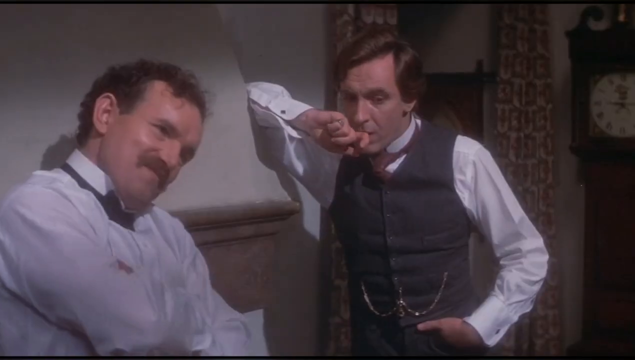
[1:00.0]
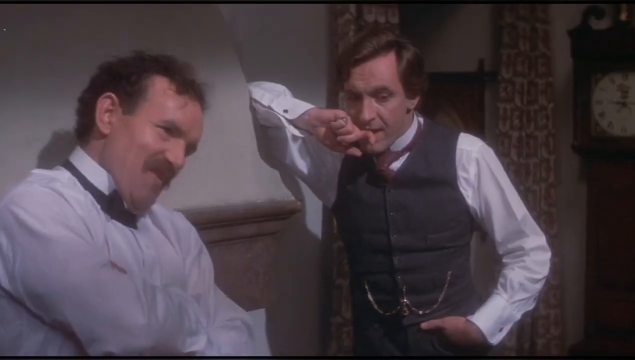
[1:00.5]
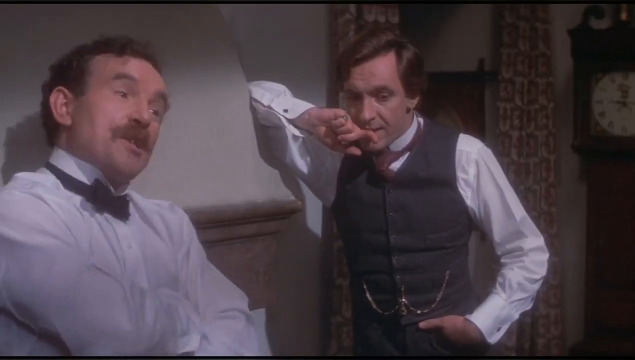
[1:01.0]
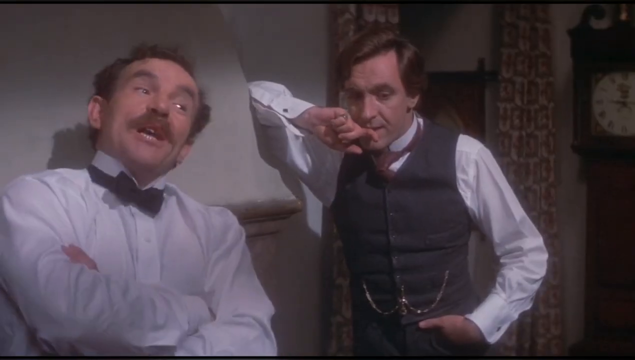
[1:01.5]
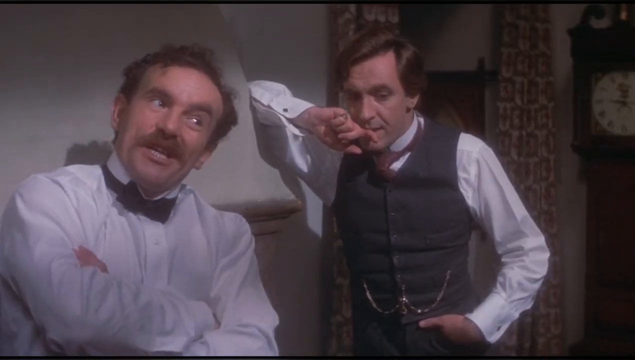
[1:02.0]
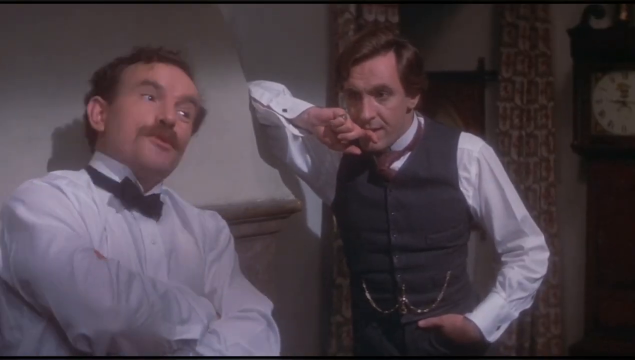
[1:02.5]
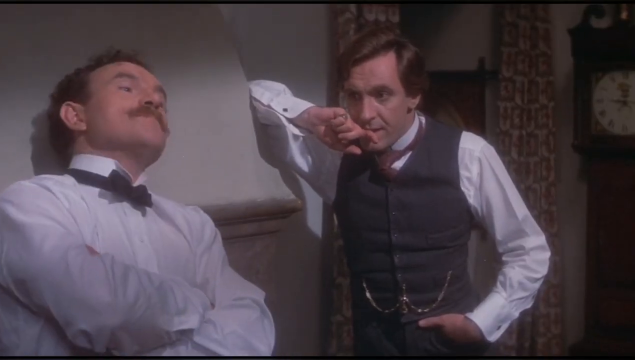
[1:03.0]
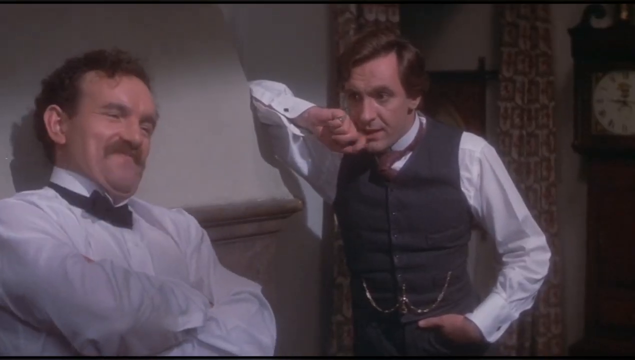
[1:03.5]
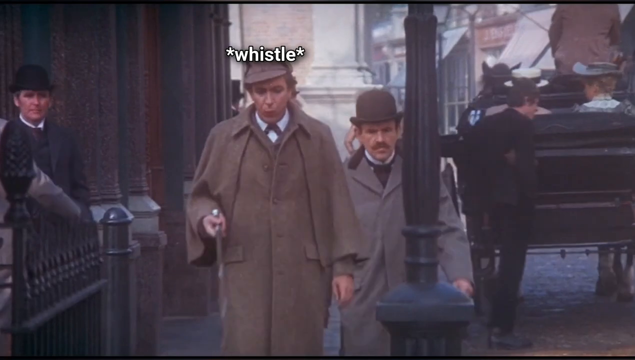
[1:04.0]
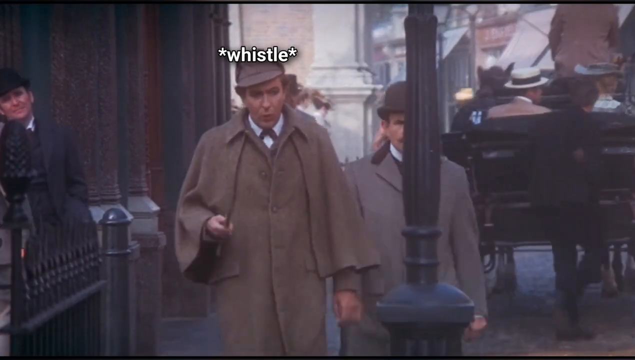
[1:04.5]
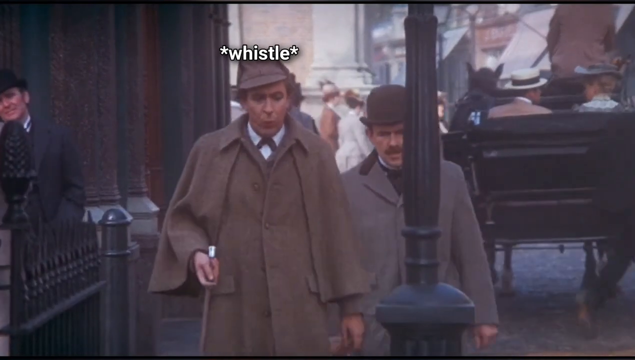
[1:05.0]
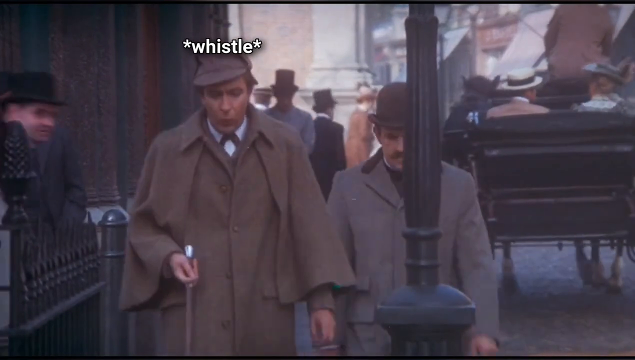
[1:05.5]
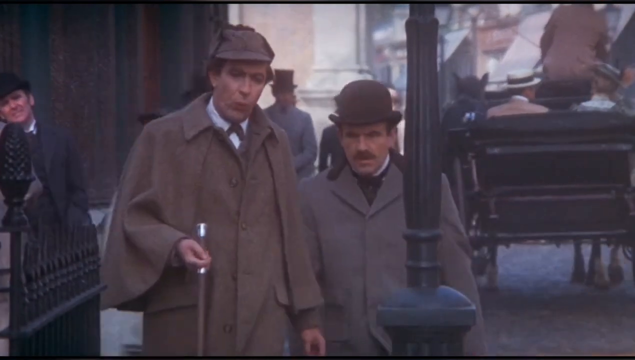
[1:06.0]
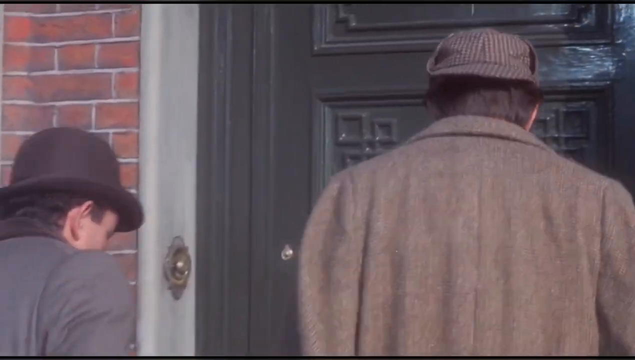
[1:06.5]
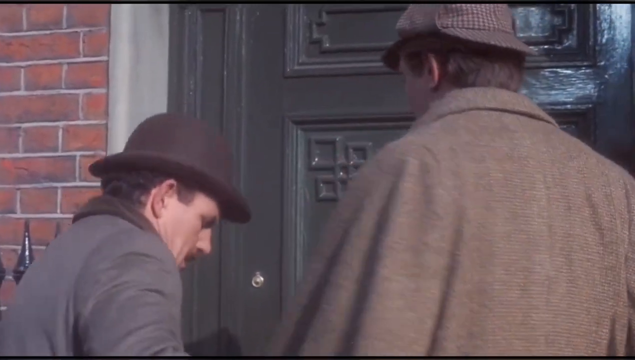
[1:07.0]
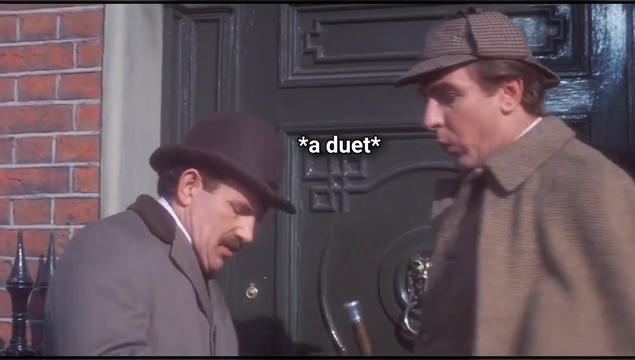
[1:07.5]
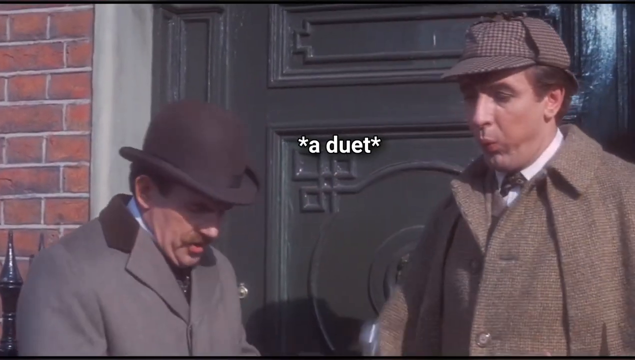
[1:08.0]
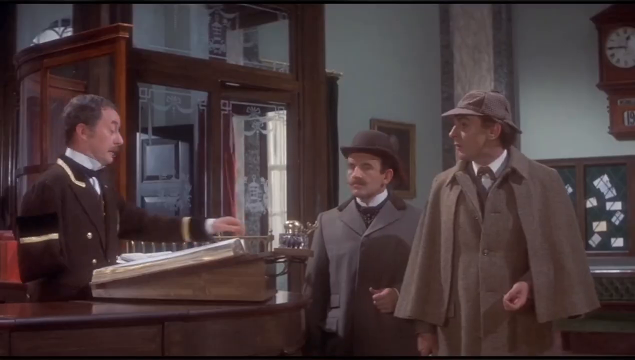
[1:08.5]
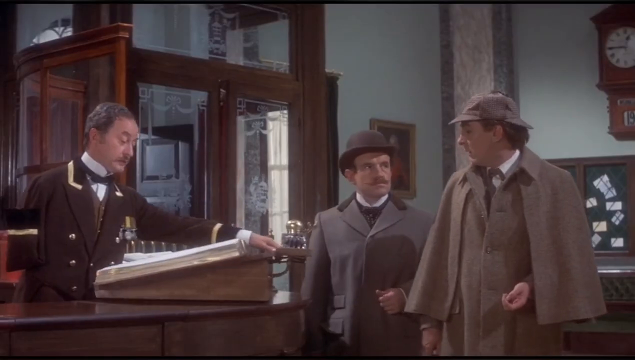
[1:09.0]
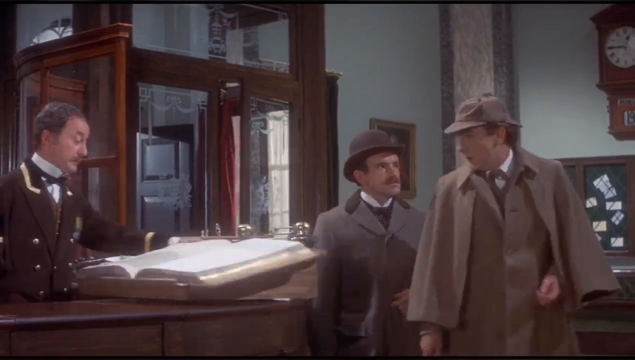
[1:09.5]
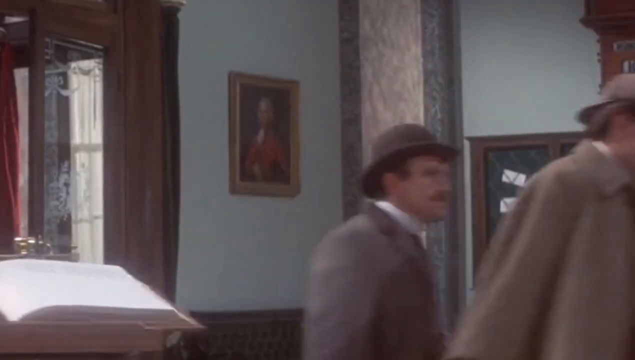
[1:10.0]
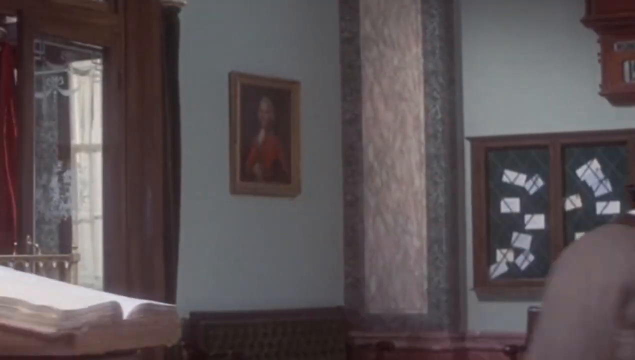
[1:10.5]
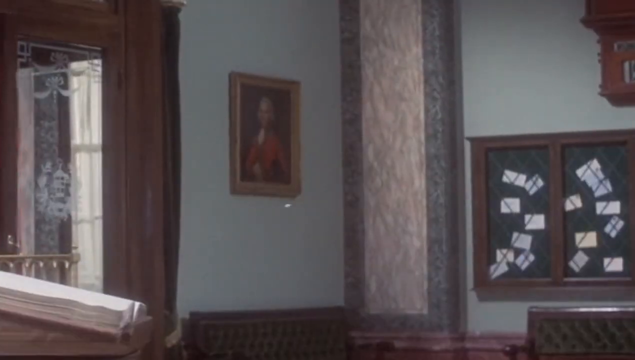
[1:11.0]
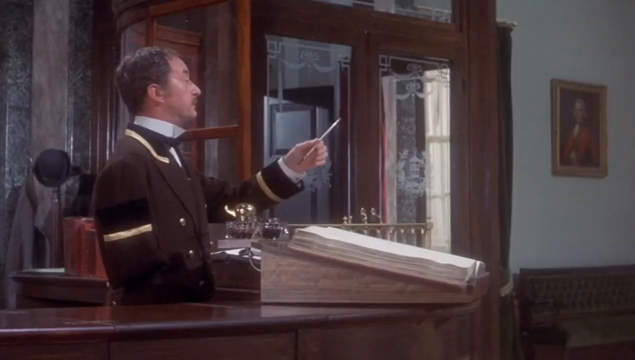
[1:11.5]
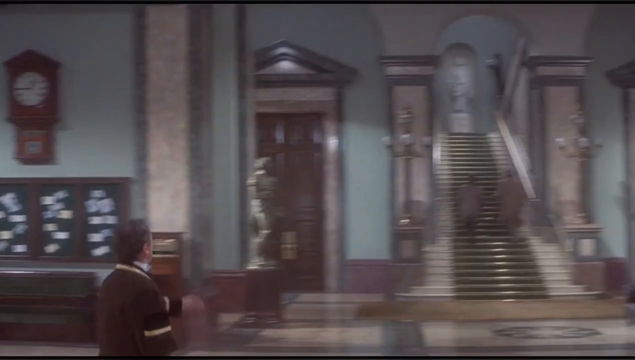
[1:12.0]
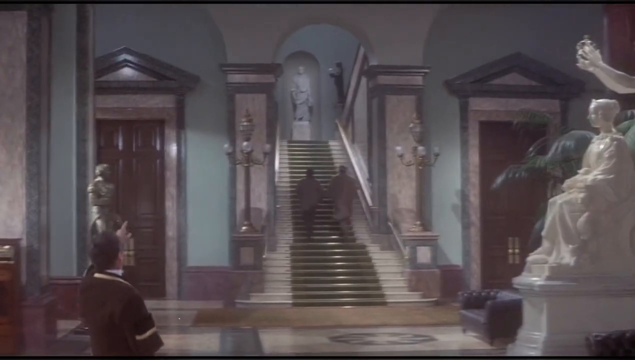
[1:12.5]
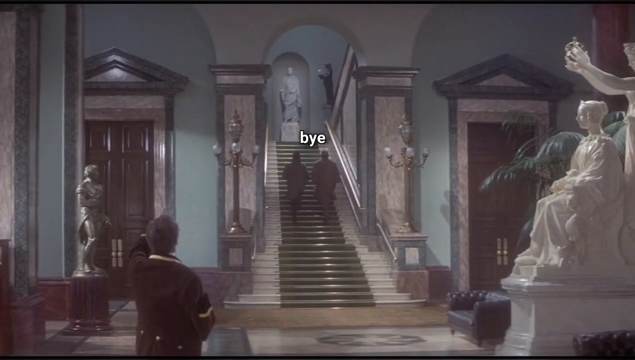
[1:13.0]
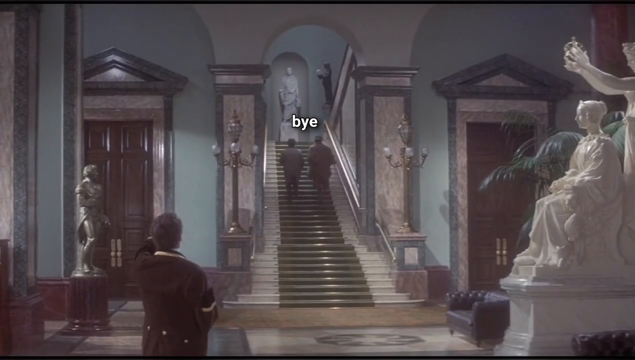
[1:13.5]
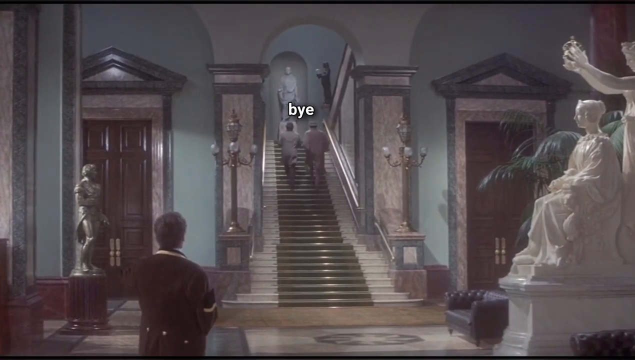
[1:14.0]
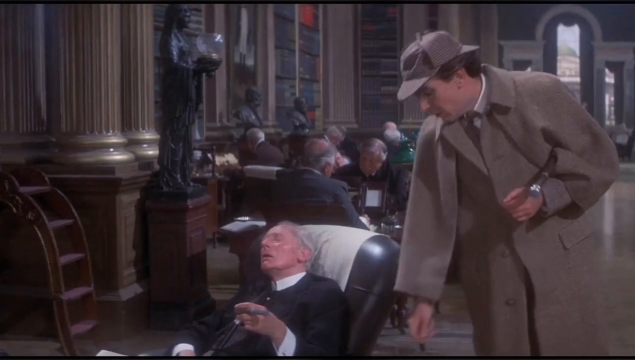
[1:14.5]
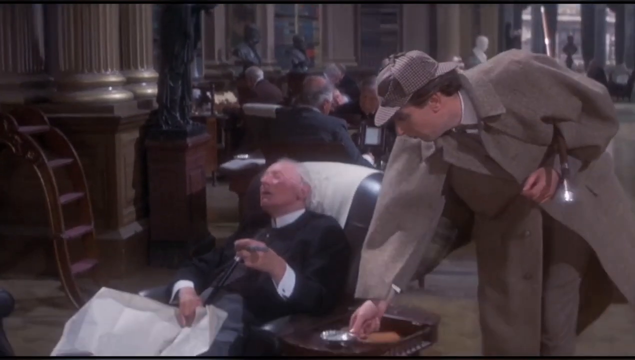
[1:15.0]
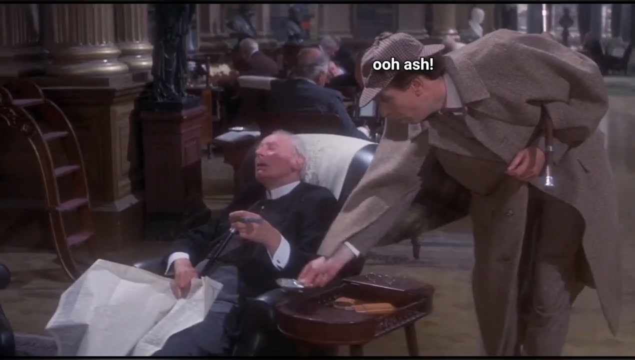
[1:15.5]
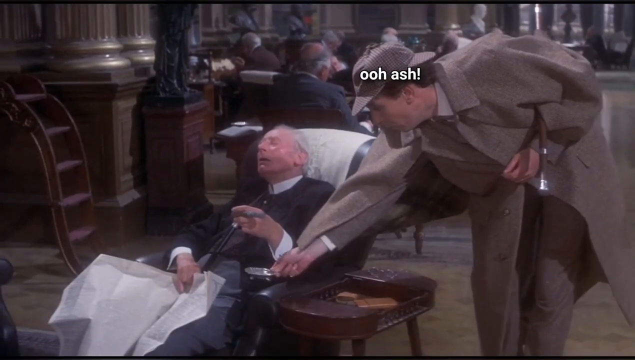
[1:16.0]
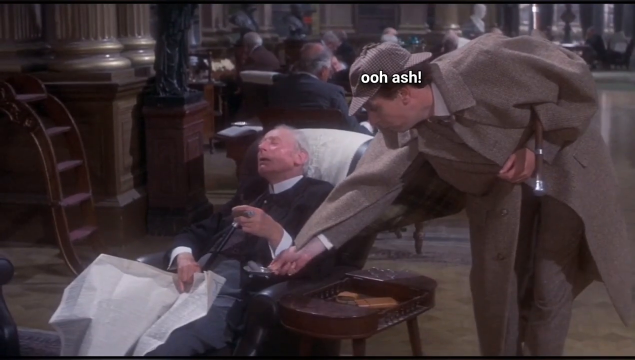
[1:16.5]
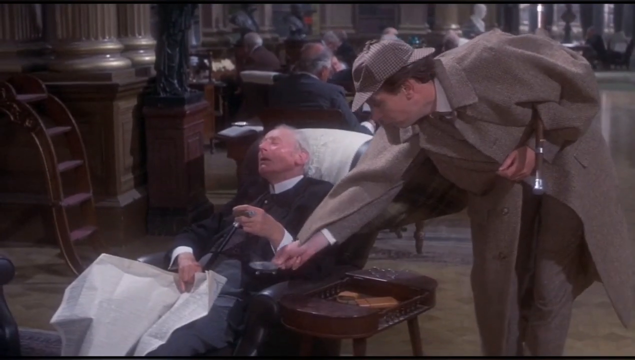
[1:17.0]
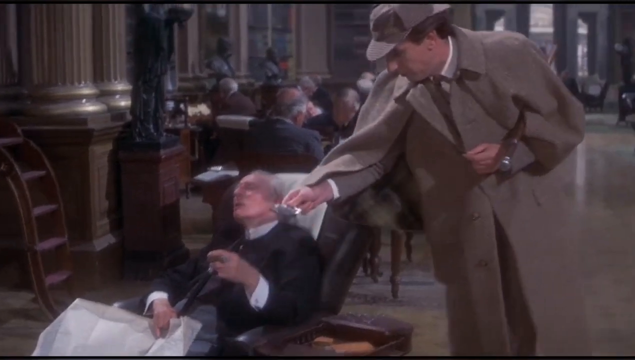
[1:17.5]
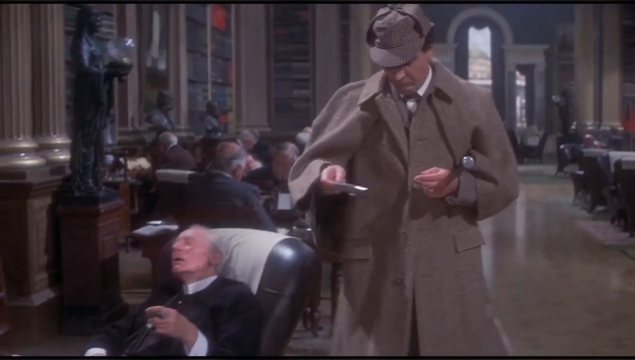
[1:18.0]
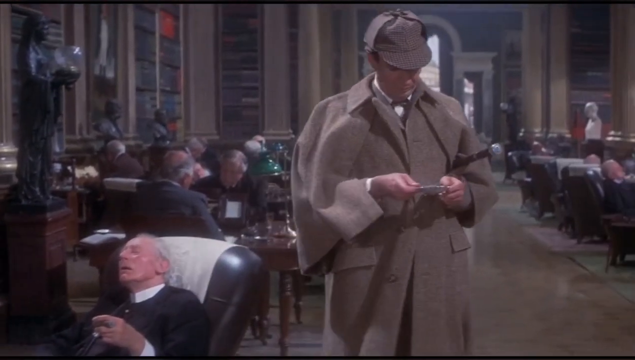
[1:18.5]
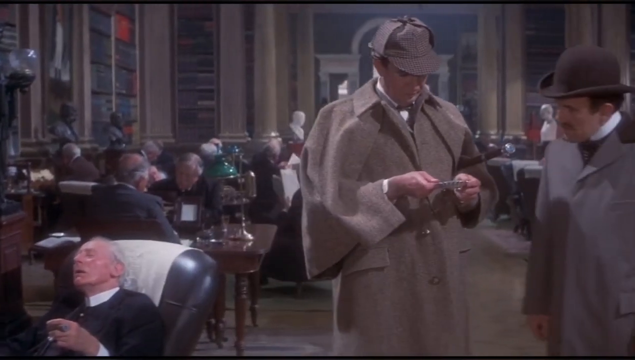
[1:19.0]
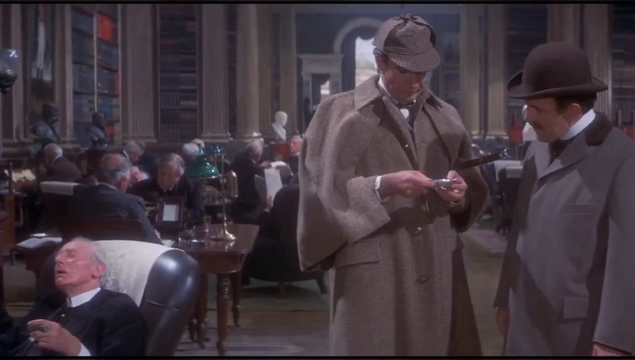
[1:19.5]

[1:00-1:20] Two gentlemen appear: one wears a white shirt with a black bow tie, the other a white shirt with a black vest. Two gentlemen walk into a very large, old-style hotel whose lobby has lots of large figurines and statues, including a large white figurine in the middle. The taller gentleman wears a large beige trench coat; the shorter one wears a black derby hat and a gray jacket. A large staircase goes up to the second floor, there are large red doors, and a bellhop with brown hair wears a red jacket. Many people are inside, and the gentleman in the beige hat and beige jacket walks around talking to different people in the lobby. An older gentleman in a leather reclining chair appears to be sleeping.